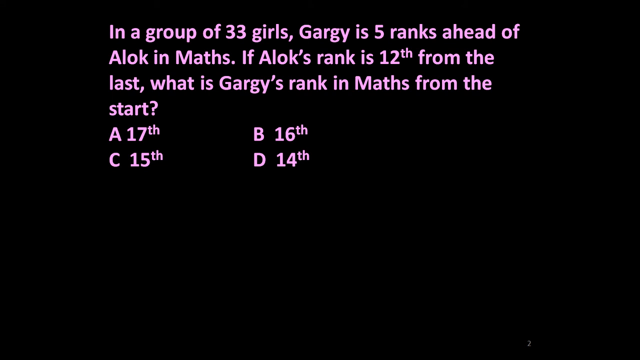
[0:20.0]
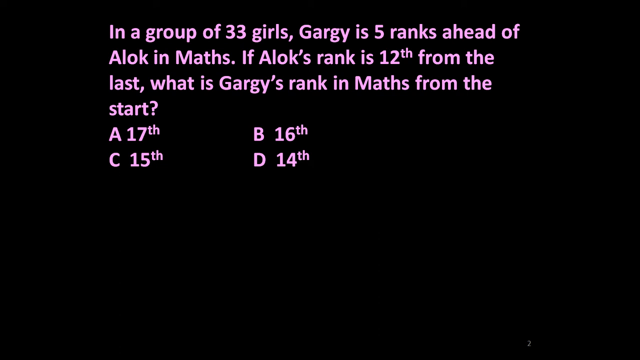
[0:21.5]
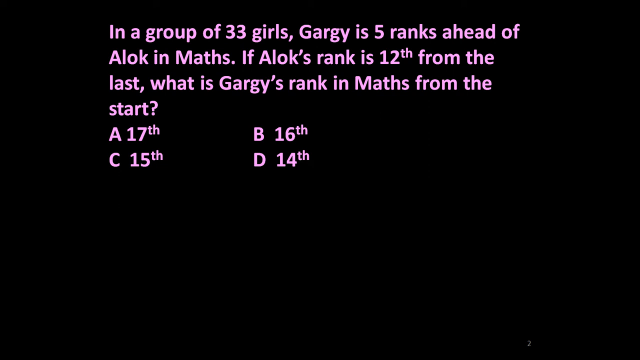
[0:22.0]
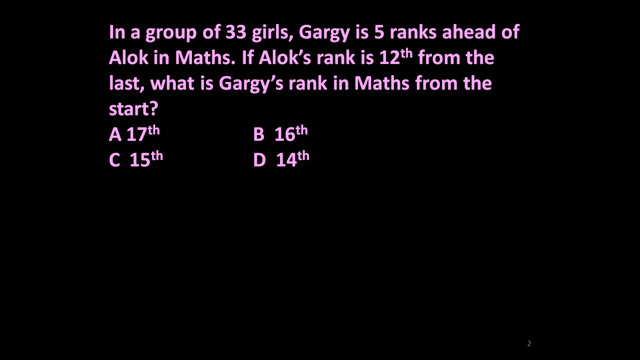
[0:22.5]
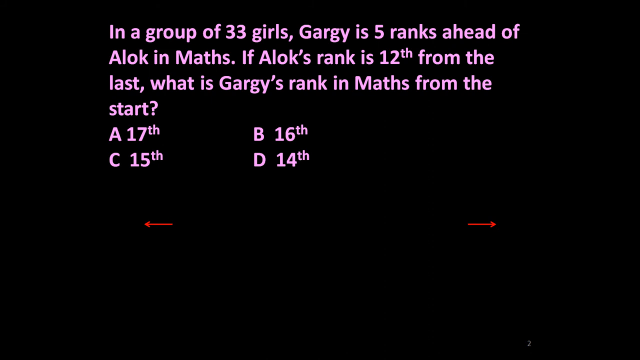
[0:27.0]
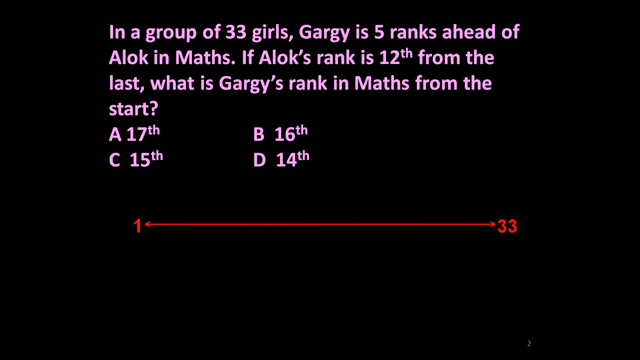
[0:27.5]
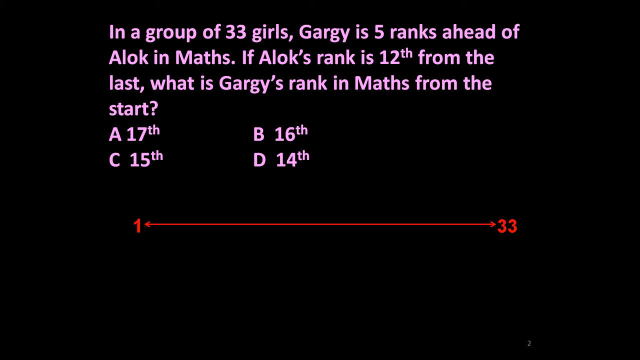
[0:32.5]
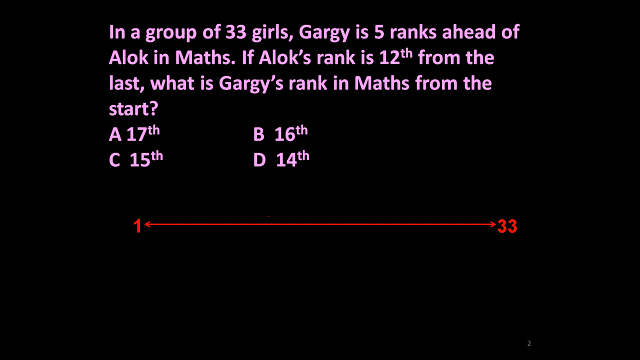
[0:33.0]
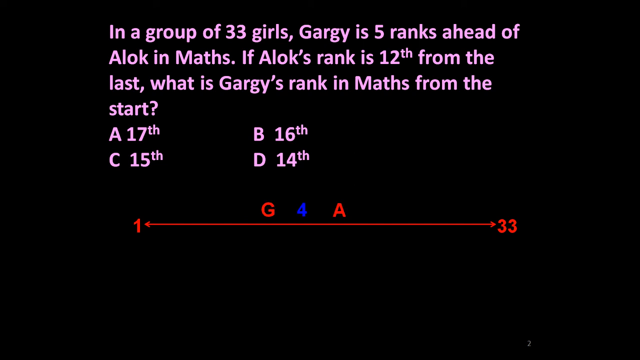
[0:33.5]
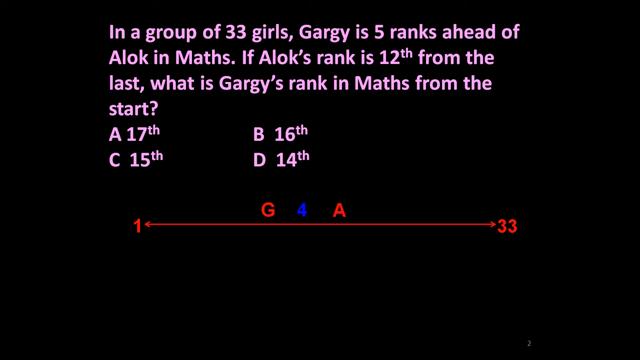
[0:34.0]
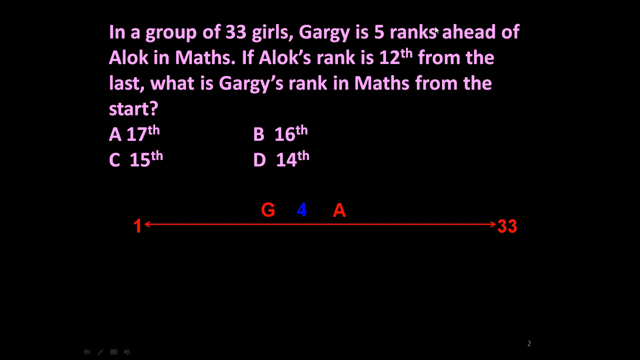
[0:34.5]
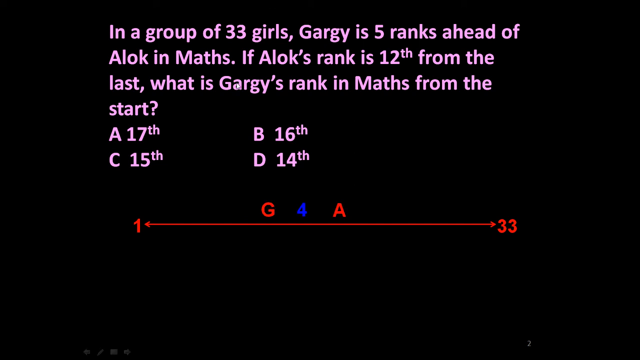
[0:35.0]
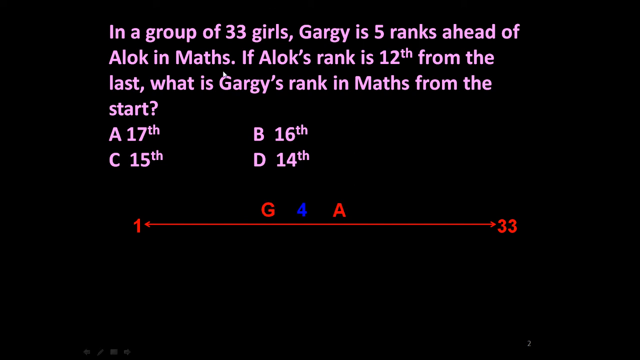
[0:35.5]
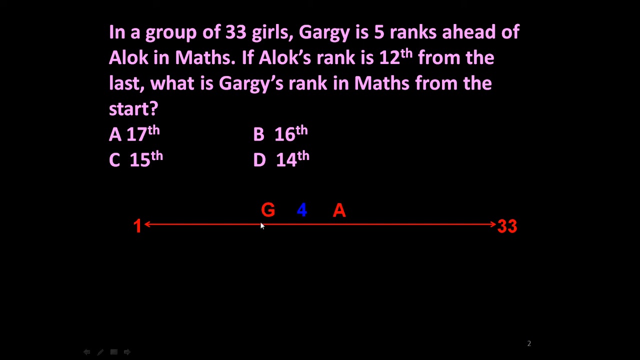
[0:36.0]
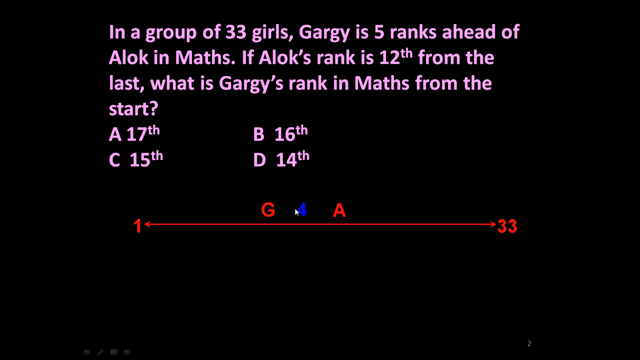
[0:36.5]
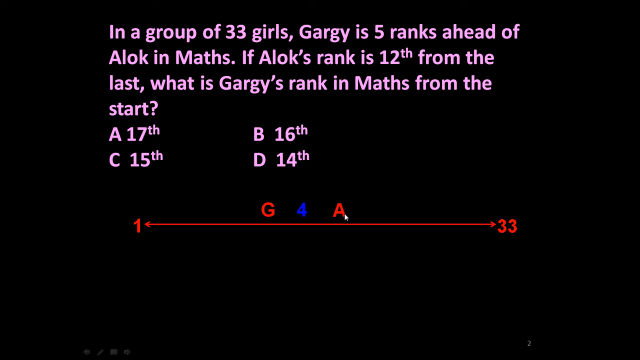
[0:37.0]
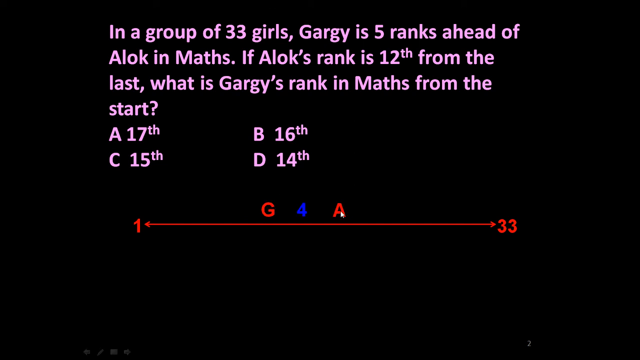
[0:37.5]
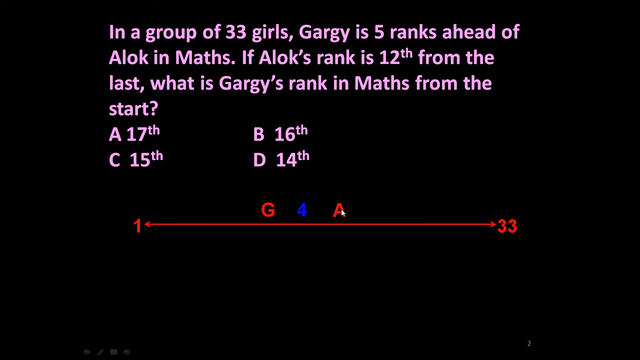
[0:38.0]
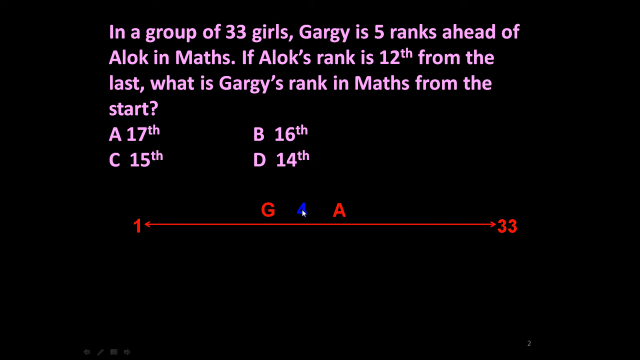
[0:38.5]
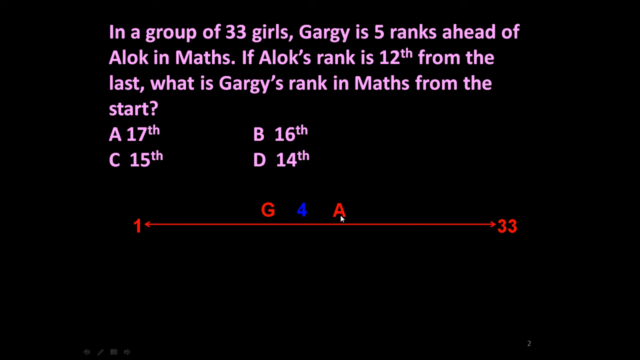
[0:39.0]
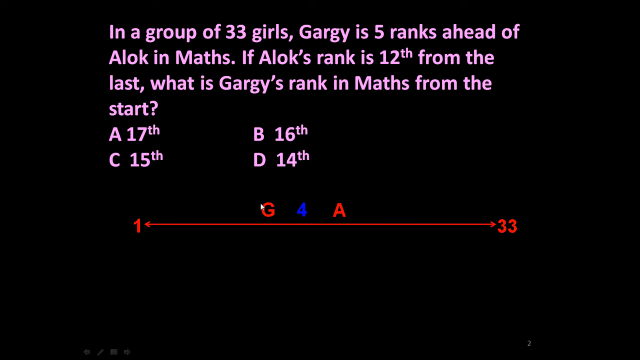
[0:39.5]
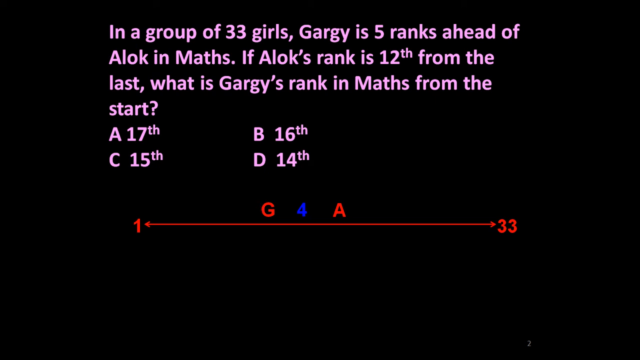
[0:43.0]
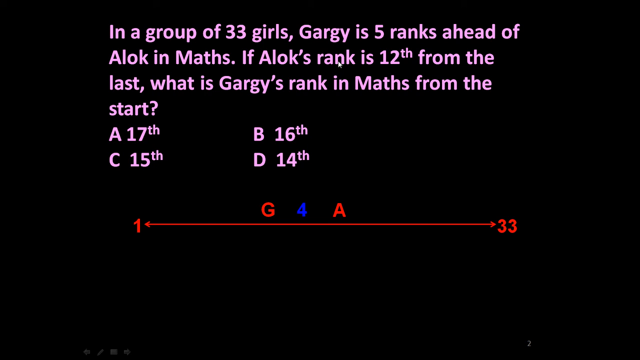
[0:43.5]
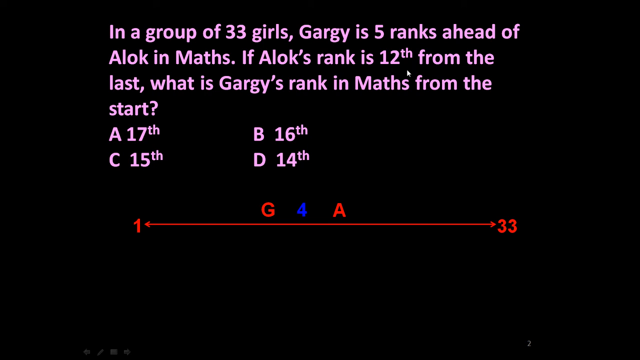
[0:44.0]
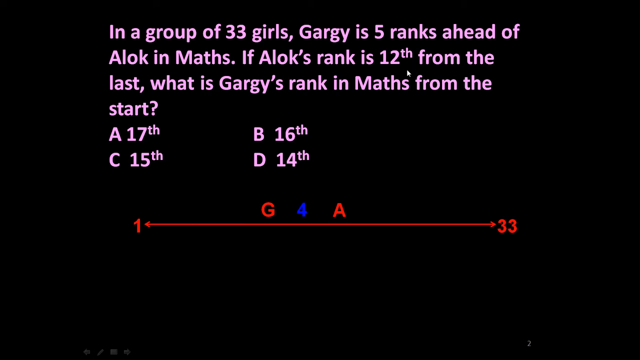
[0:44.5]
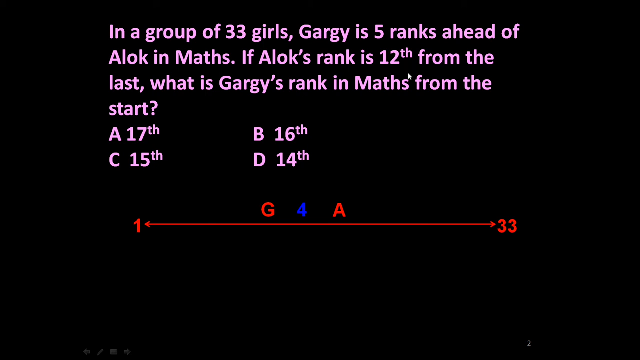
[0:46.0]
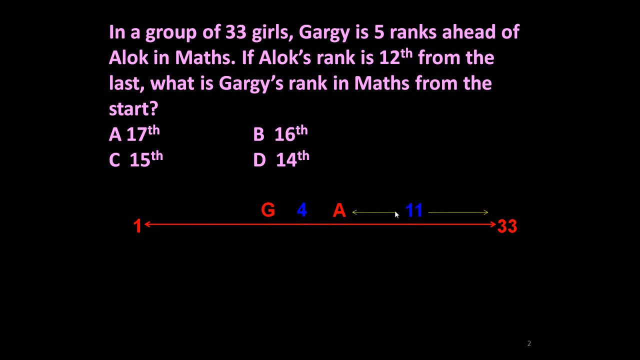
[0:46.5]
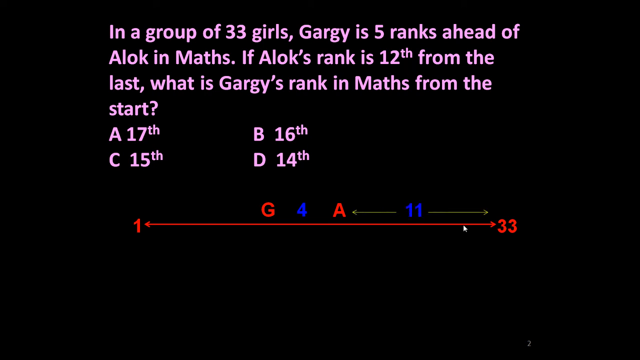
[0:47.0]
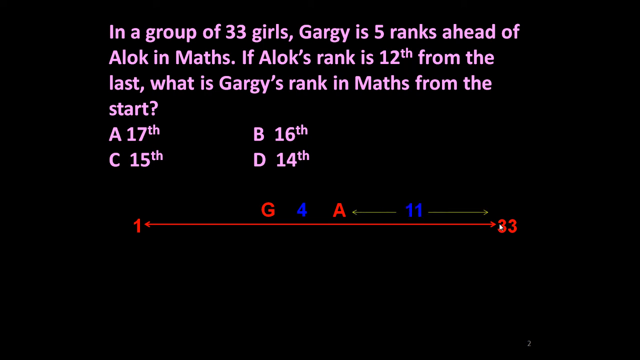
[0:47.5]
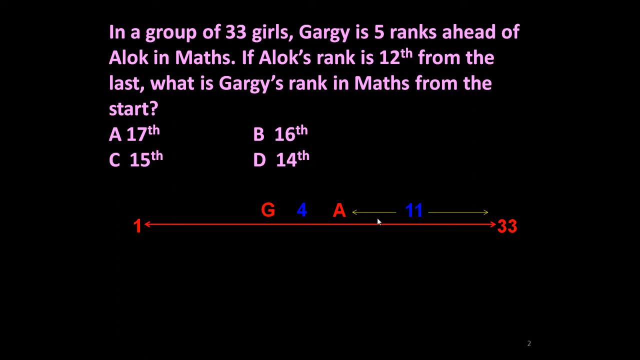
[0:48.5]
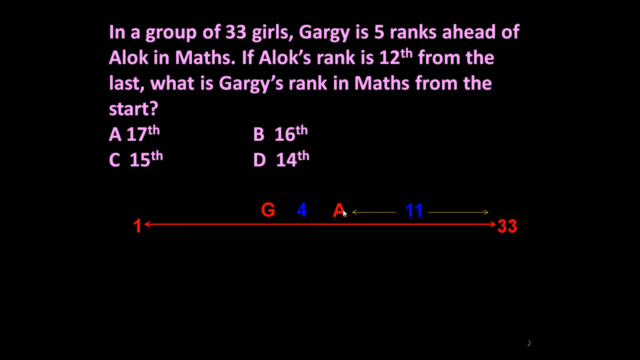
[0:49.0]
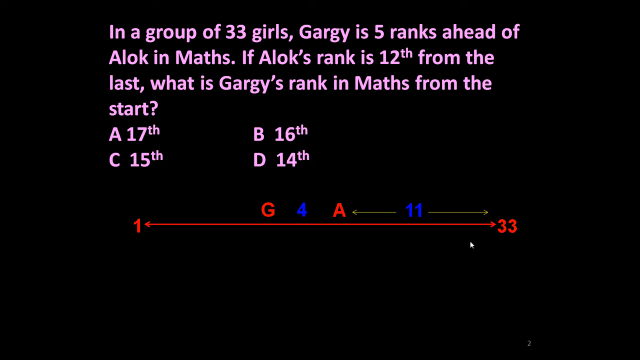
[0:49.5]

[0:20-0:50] The question appears in pink font on a black background. Part of it reads: "If Alok's rank is 12th from the last, what is Gargy's rank in Maths from the start?" The options are A 17th, B 16th, C 15th and D 14th. A red line chart is then drawn just below the question and options, starting at the number 1 and ending at 33. Three symbols pop up in the middle of the line chart: a G in red, a 4 in blue and an A in red. The mouse moves across the screen to highlight the G, 4 and A in the middle of the screen before the screen cuts.